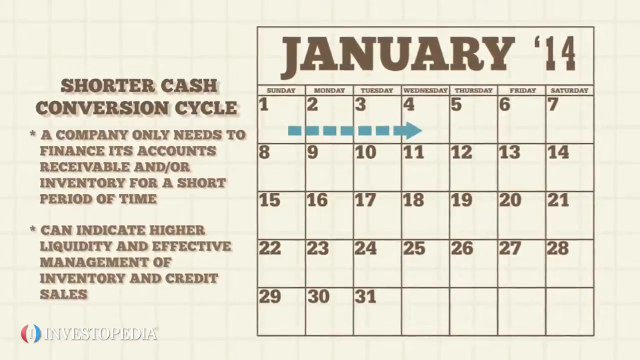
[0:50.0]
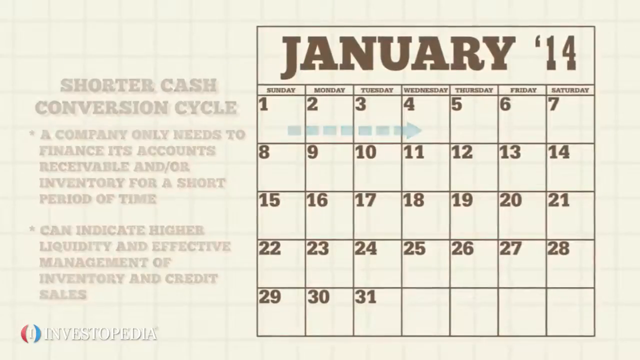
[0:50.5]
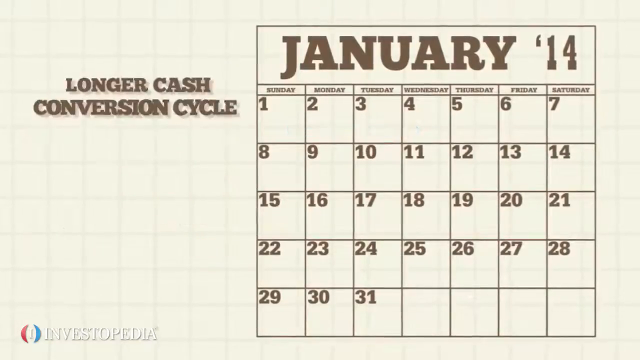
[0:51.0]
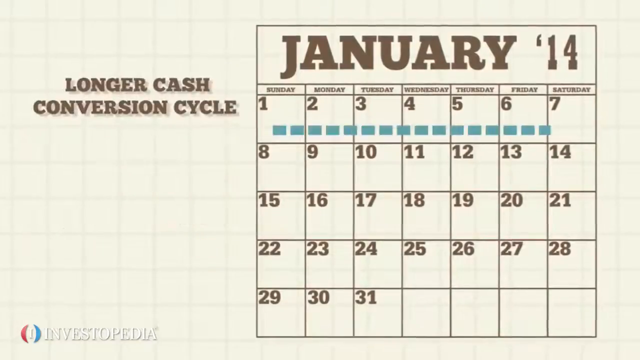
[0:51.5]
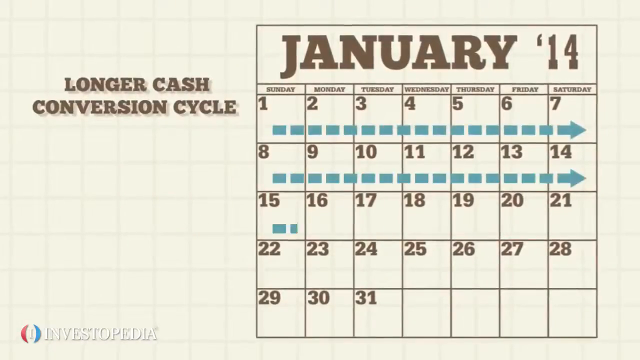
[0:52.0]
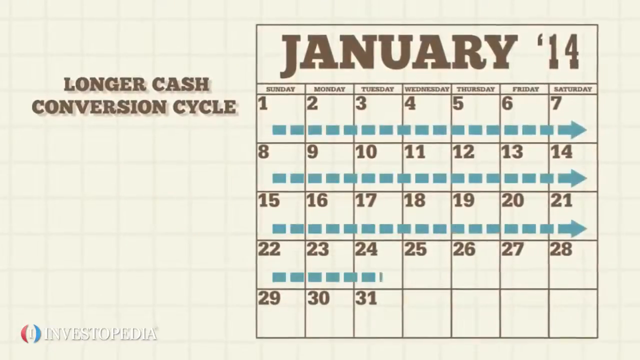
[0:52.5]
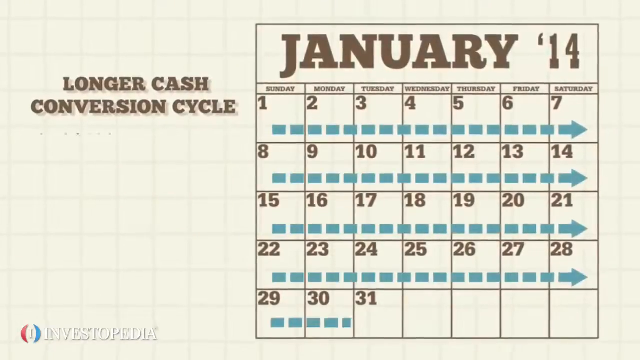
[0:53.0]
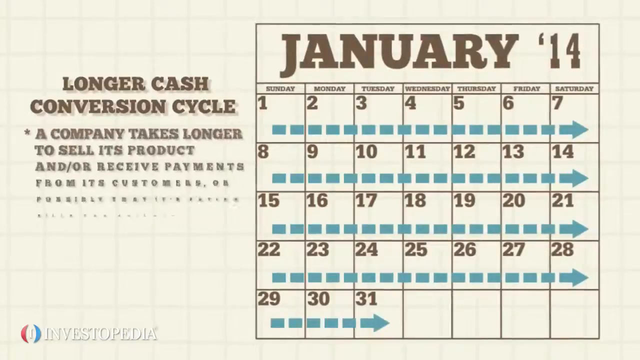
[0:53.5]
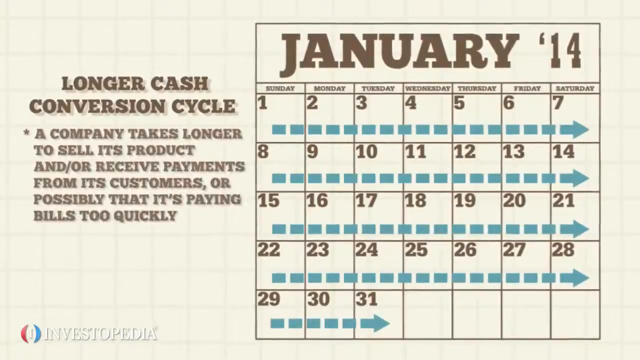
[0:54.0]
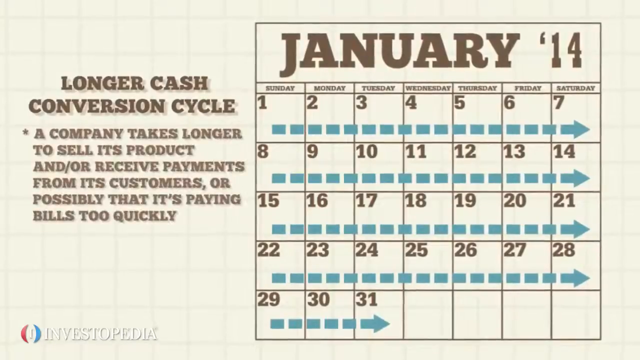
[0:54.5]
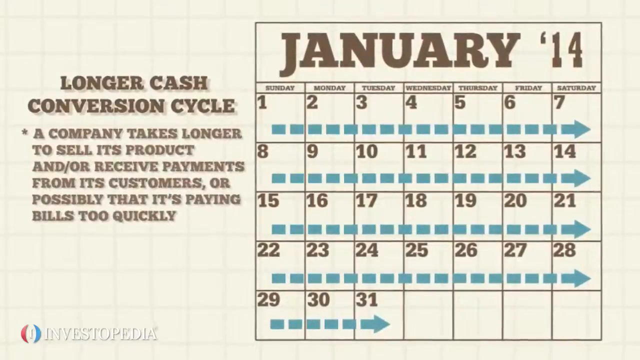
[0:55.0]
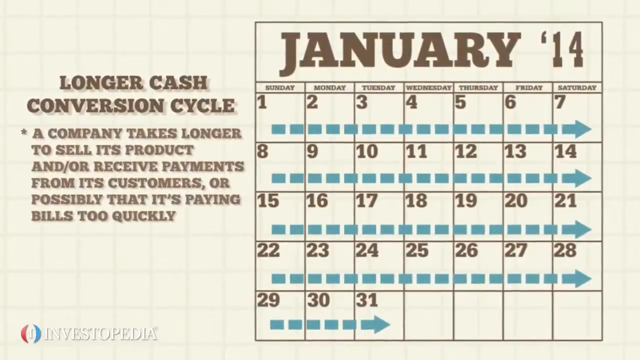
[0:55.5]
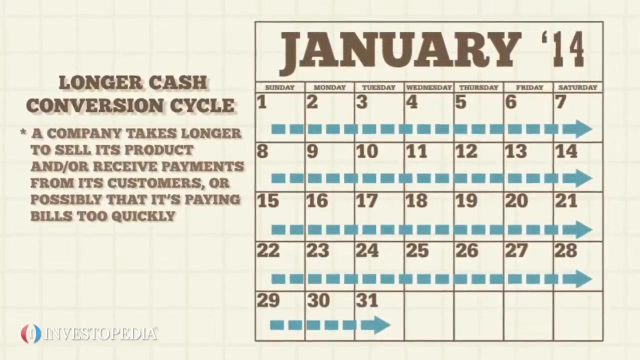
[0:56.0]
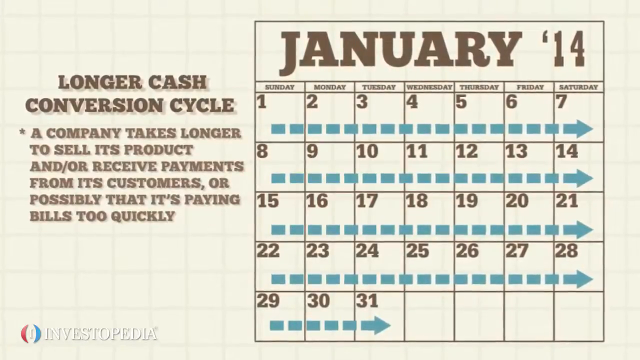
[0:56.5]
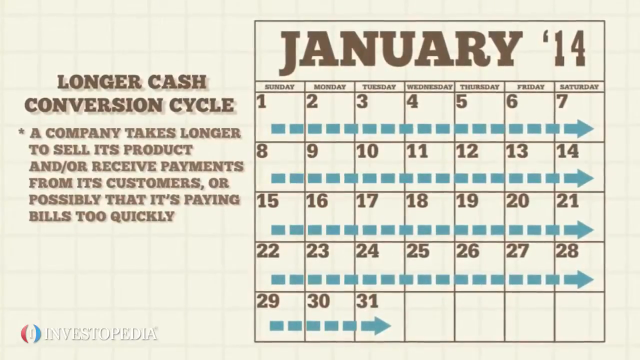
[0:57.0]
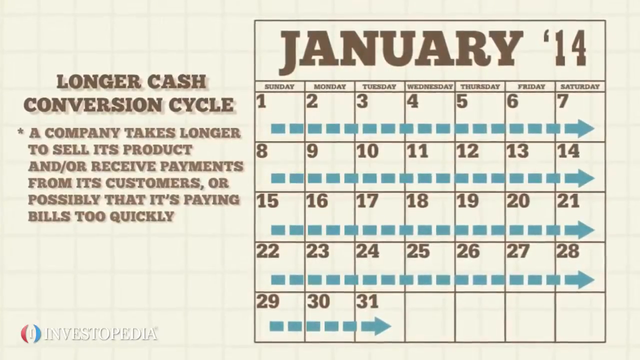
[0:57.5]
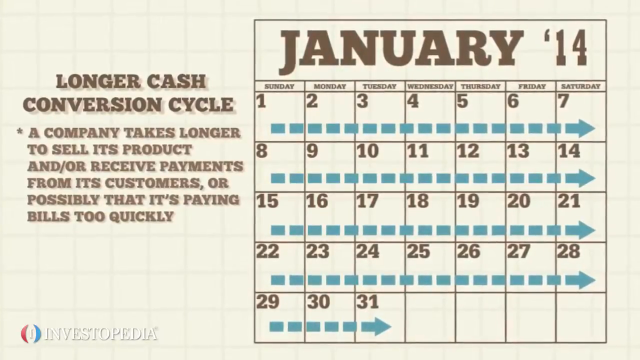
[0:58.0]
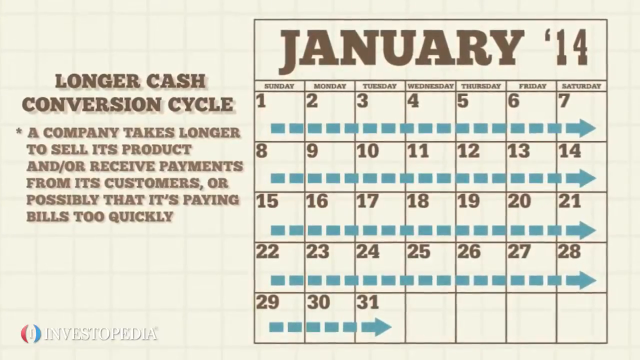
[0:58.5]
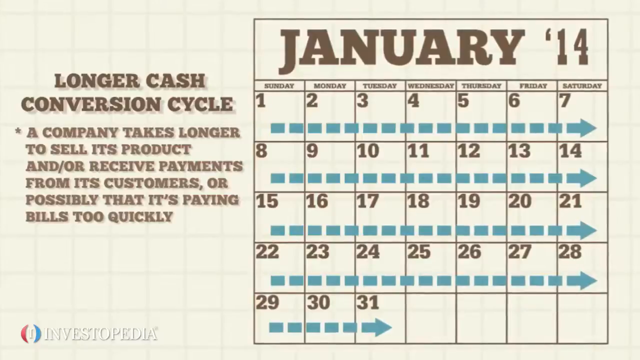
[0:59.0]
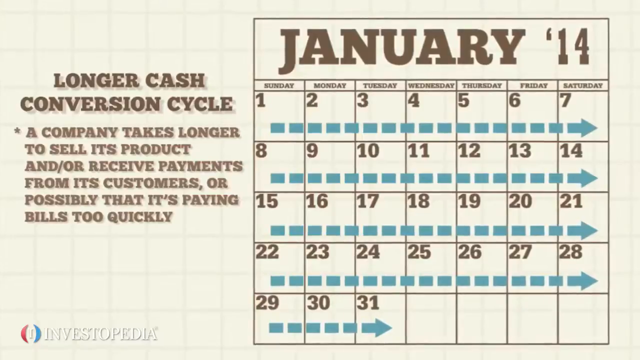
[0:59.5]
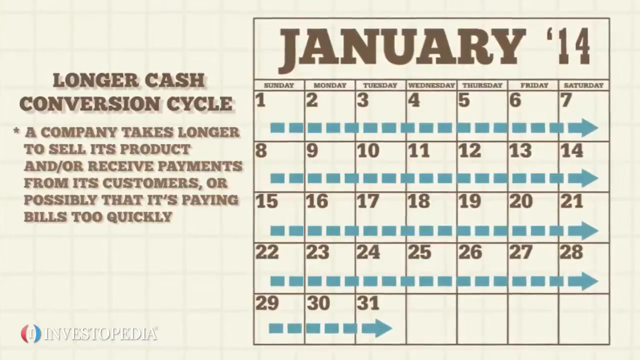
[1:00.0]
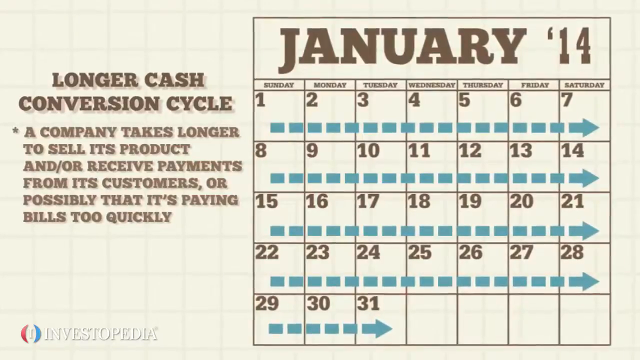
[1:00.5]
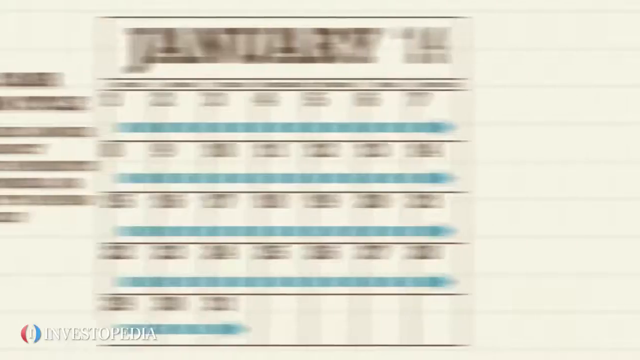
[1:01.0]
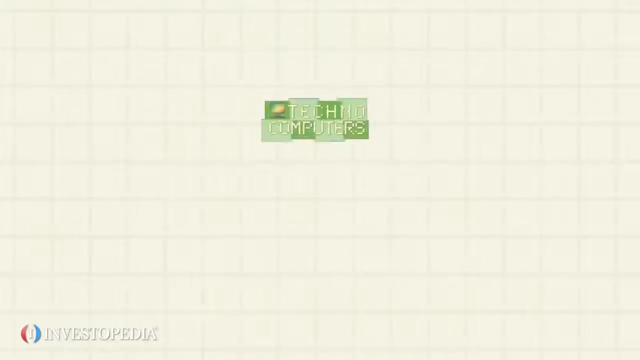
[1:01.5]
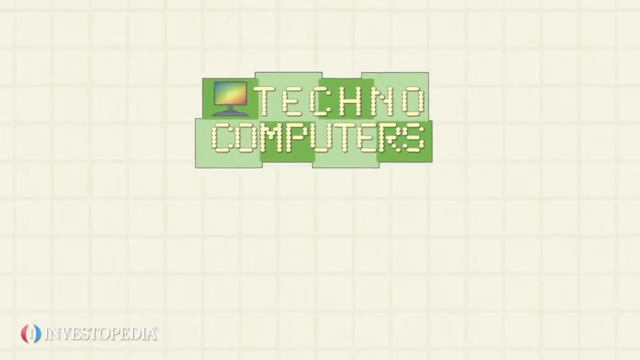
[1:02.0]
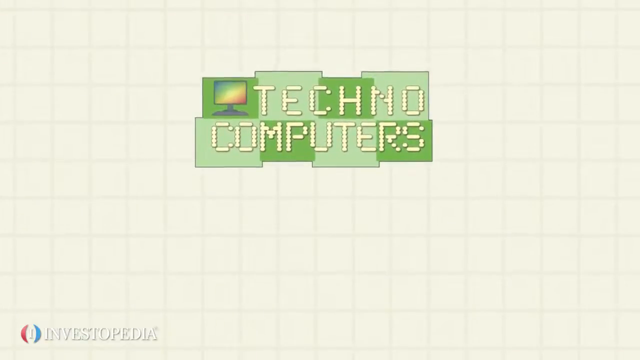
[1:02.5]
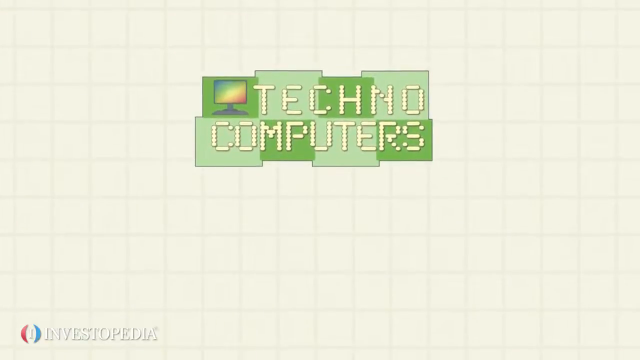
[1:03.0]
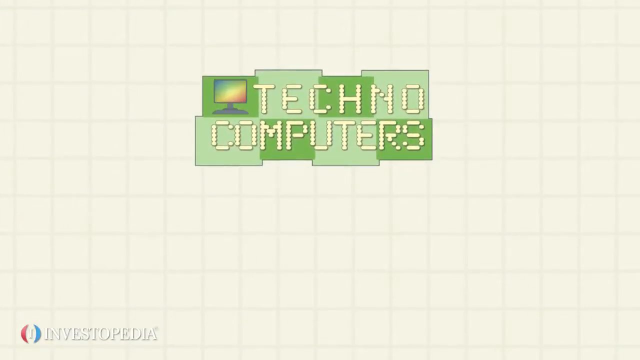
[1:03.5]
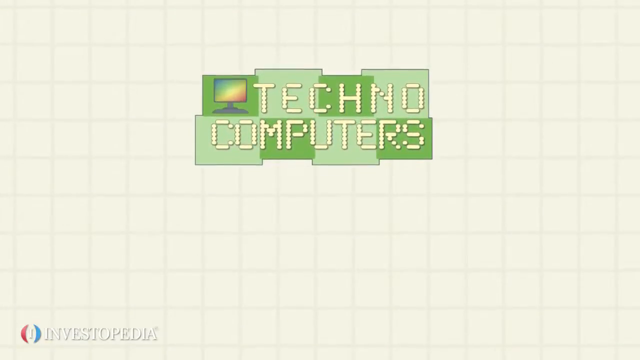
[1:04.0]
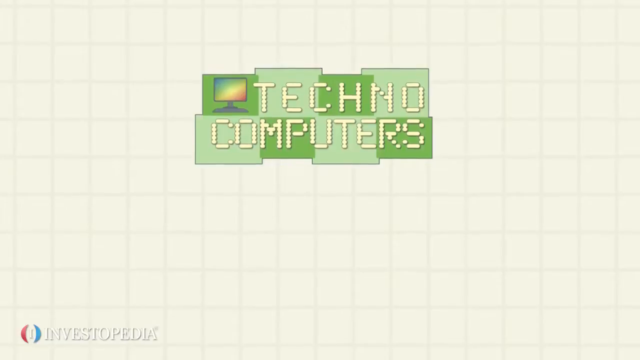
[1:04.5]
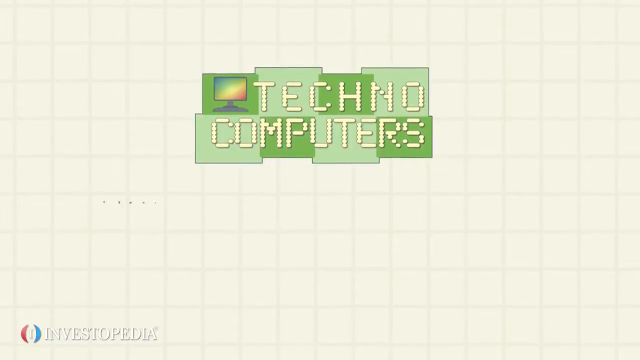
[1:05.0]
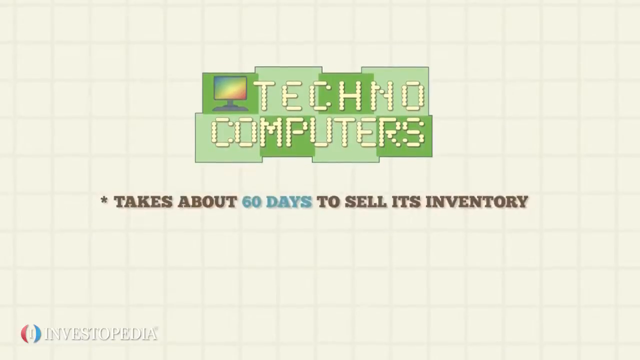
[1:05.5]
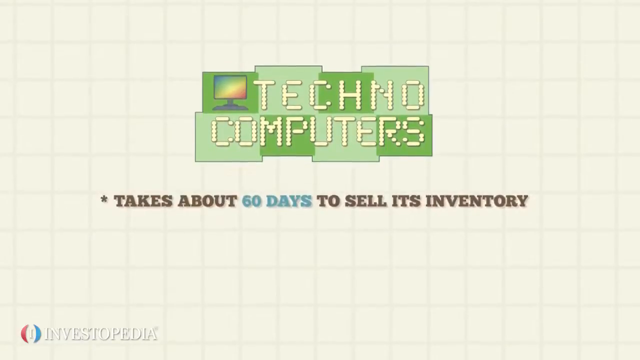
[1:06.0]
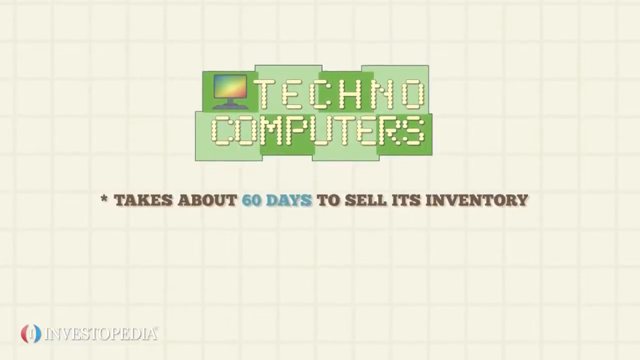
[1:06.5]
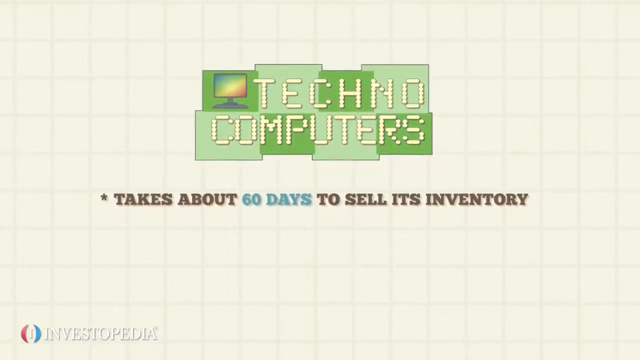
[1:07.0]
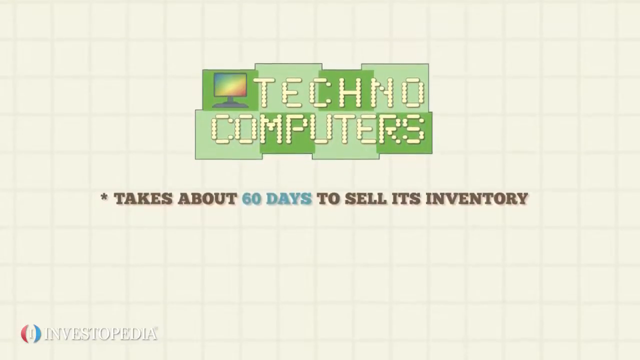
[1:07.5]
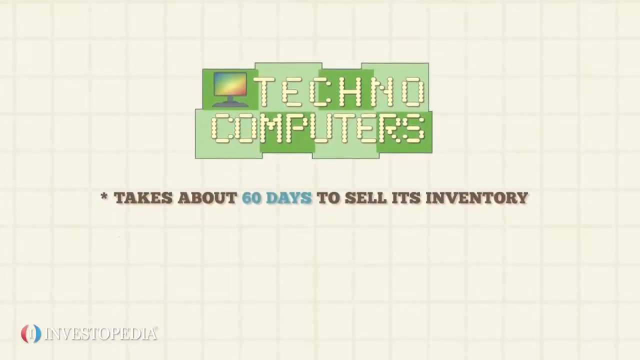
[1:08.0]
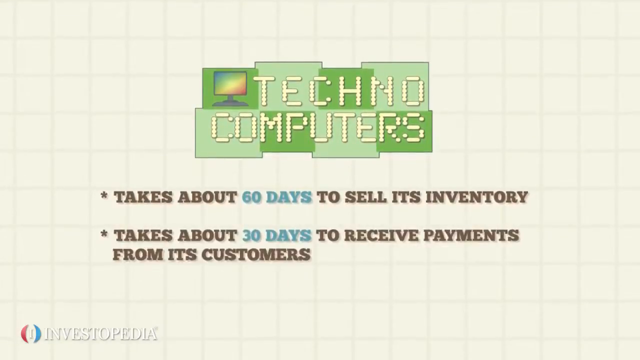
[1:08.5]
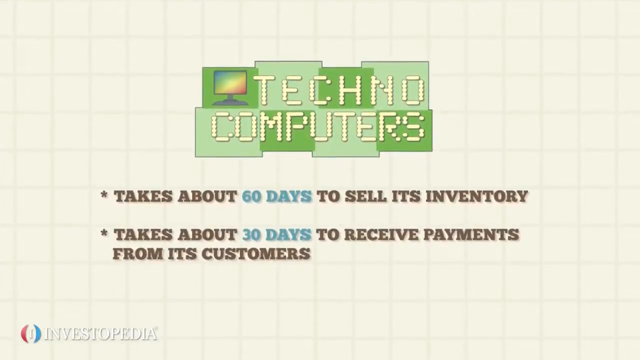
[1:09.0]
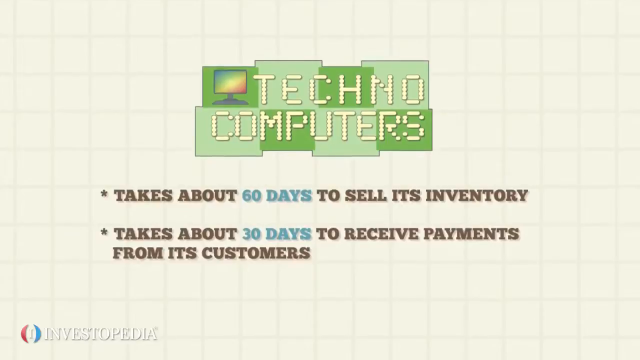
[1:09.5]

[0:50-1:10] On the calendar, the small line from 1 to 4 is removed. "Longer cash conversion cycle" appears, and blue lines appear across the weeks: one from 1 January to 7 January, Sunday to Saturday, then one from 8 to 14 January, one from 15 to 21 January, one from 22 to 28 January and one from 29 to 31 January. After the lines move, a bullet appears under "longer cash conversion cycle" with information explaining the process just shown in the calendar. The calendar then disappears and "techno computers" appears, with a mini computer above it. "Techno computers" is written in dusty yellow on a light green and dark green background. Below it, a star appears with information, then another star with information. The text is in brown and blue fonts, with the numbers of days in blue: 60 days and 30 days.